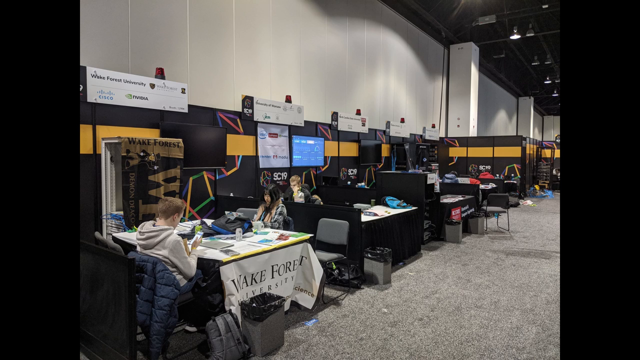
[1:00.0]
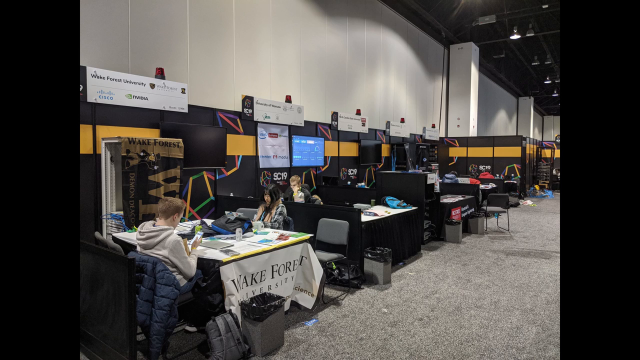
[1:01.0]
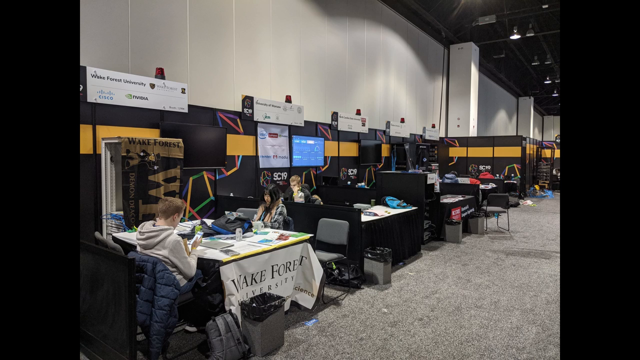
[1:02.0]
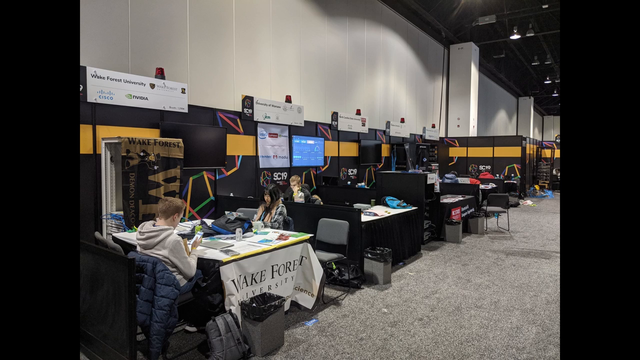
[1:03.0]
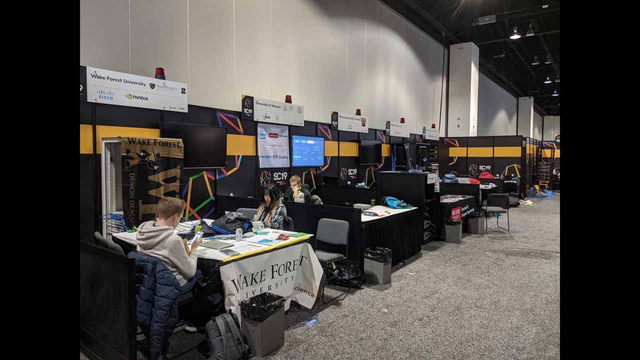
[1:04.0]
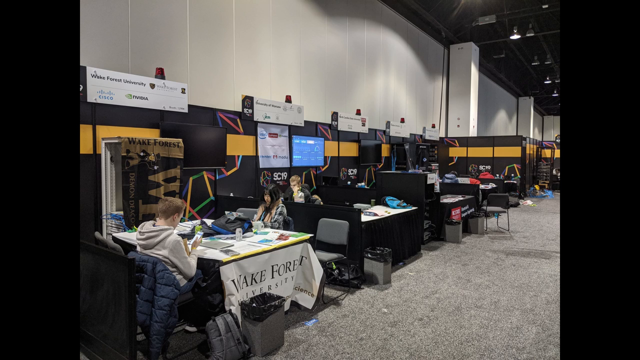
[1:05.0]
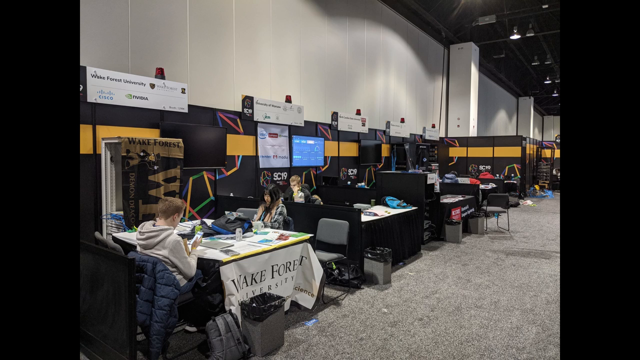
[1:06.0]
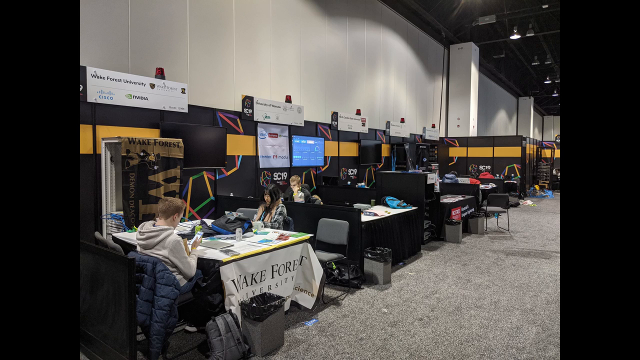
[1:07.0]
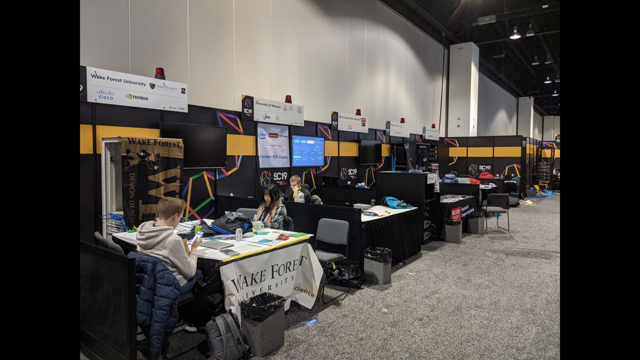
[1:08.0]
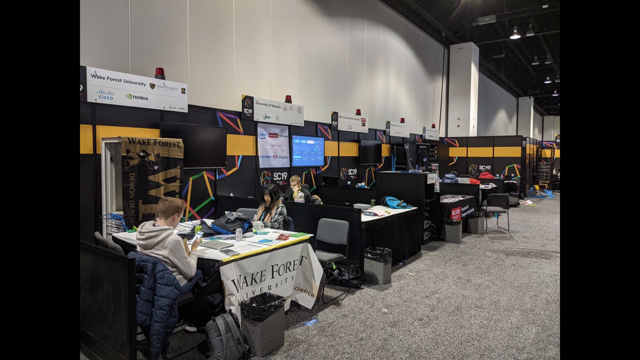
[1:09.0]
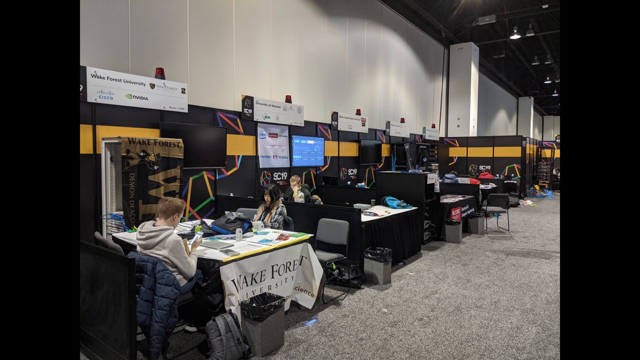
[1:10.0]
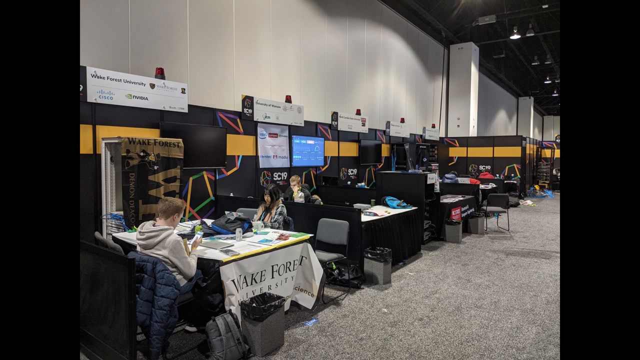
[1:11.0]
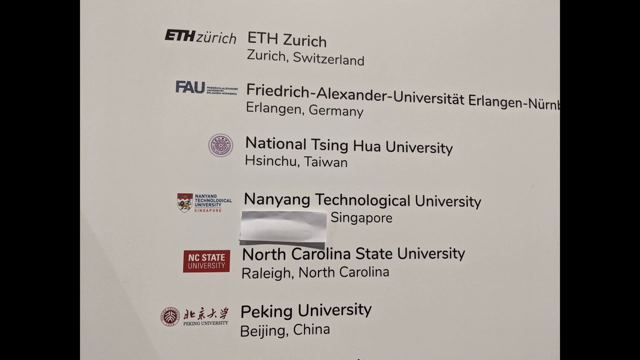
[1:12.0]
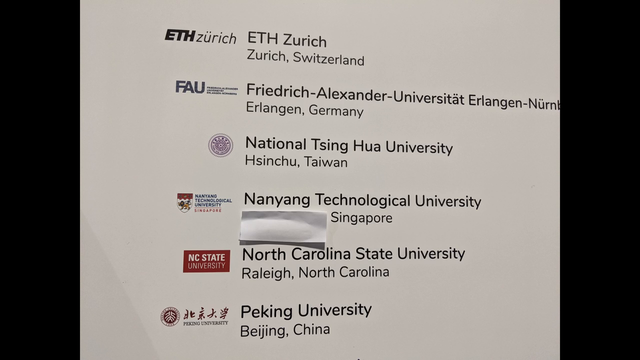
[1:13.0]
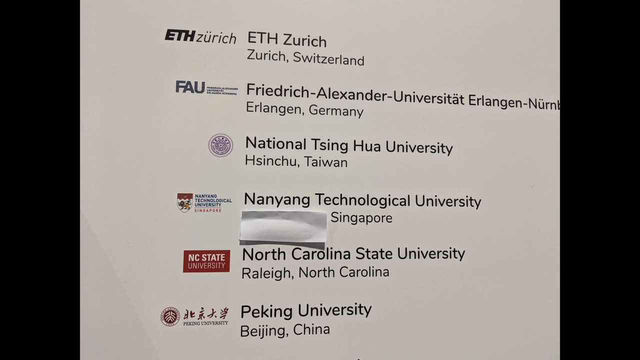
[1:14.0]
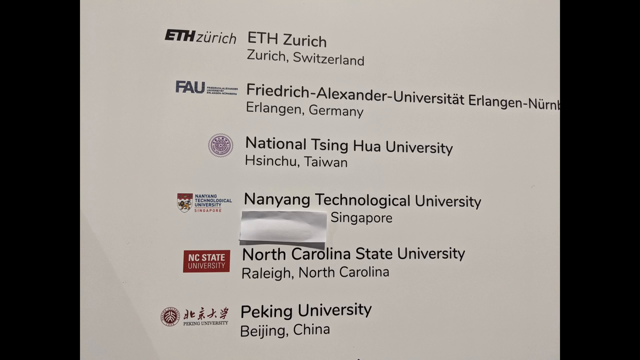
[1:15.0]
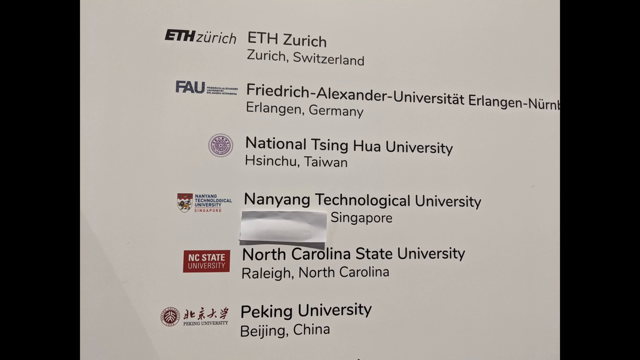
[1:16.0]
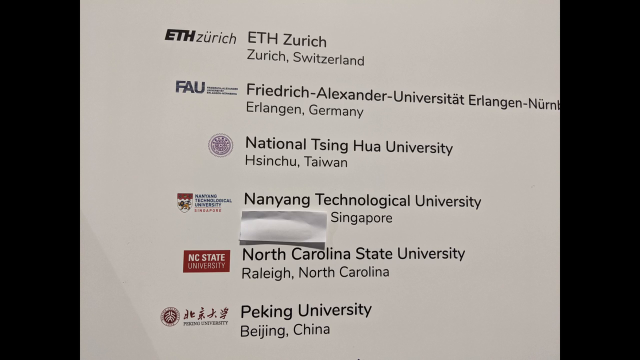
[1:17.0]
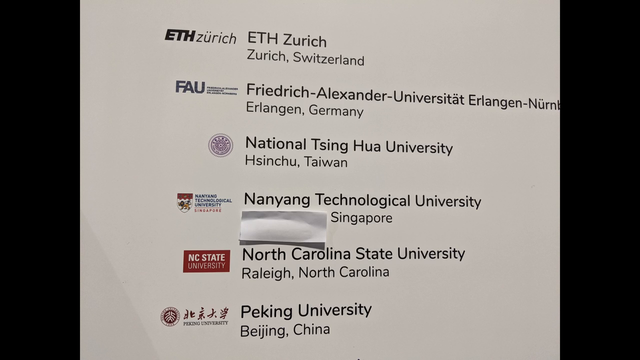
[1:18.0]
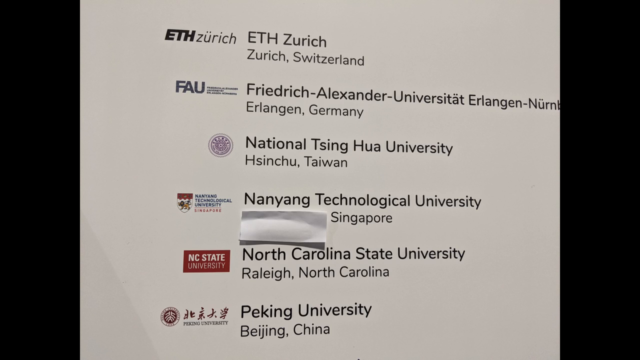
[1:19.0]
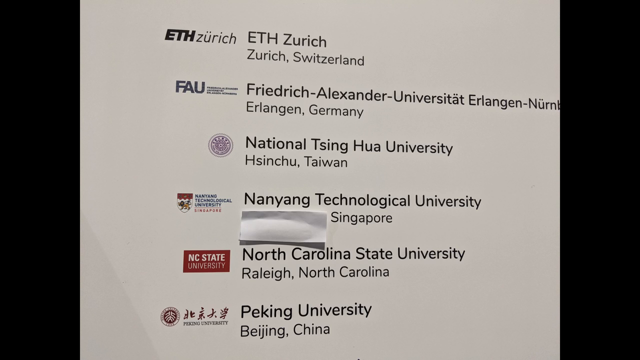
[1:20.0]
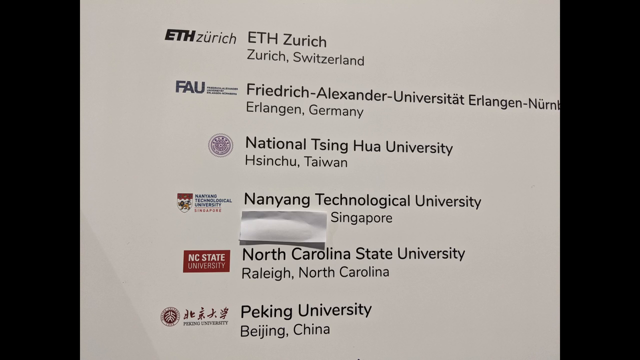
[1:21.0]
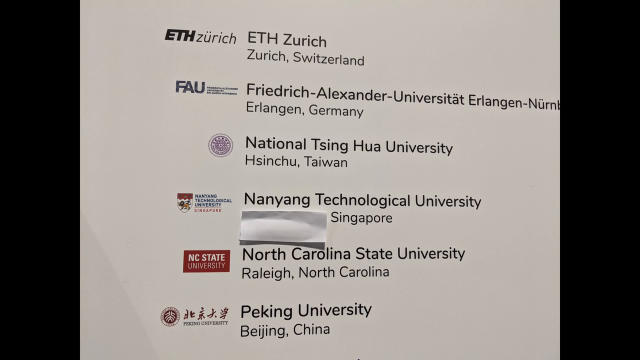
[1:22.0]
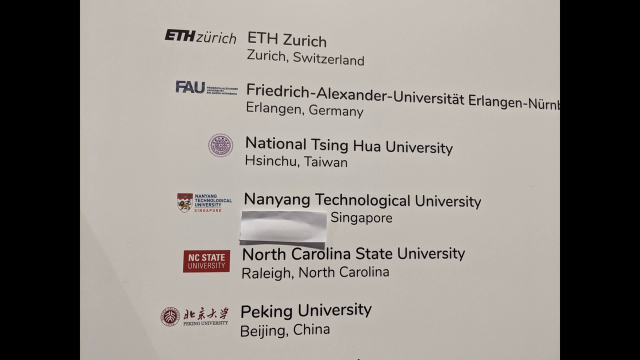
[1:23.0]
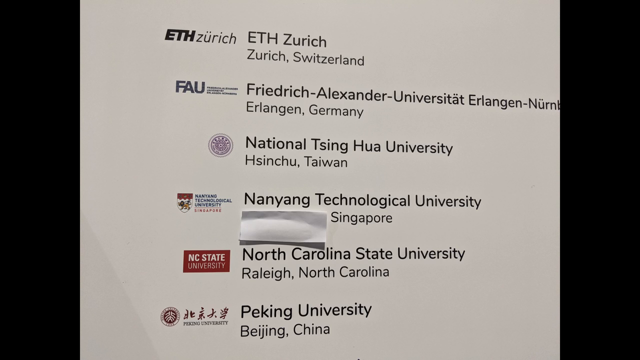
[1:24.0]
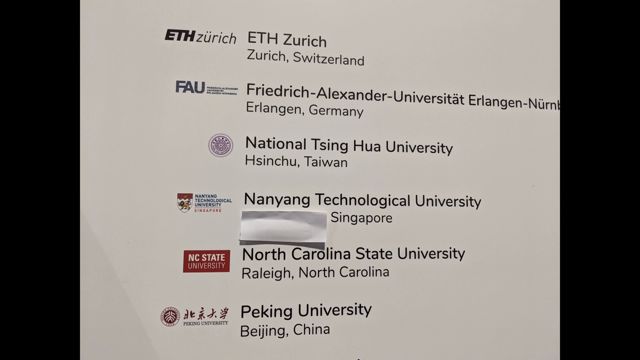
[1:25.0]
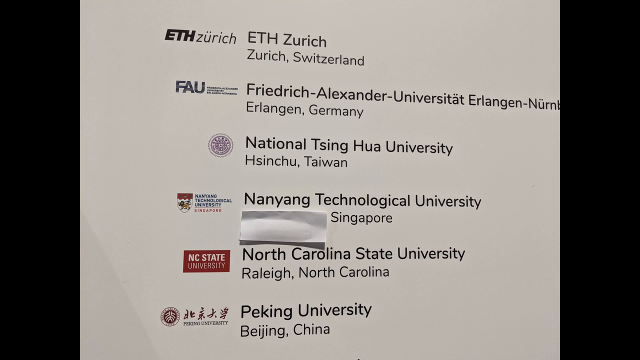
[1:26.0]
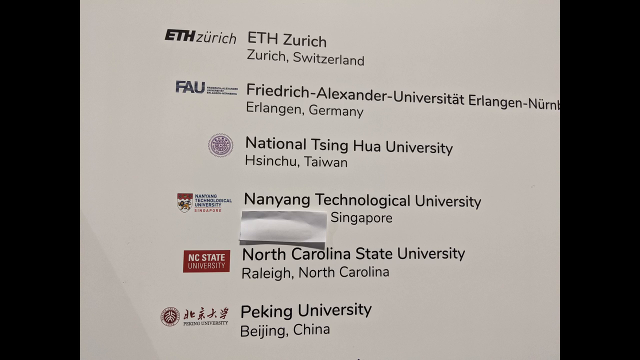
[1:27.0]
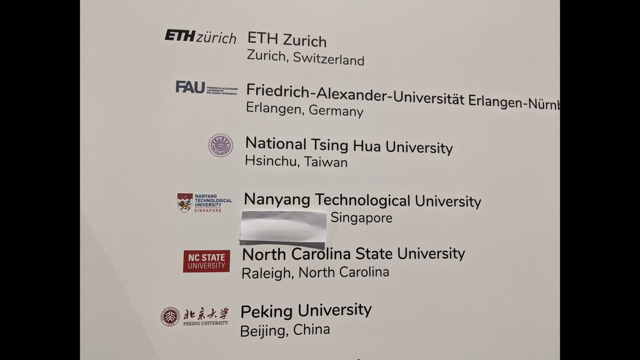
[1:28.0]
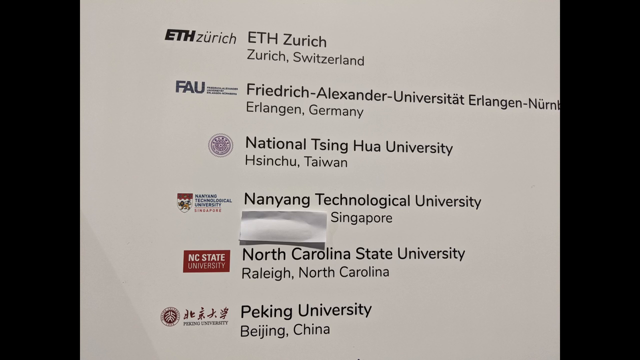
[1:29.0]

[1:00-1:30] The large area appears to be some sort of large warehouse or gym-style space. In the bottom left corner, students sit at a table, and all of the sections are separated by half-height black wall panels. Wake Forest is at the bottom left corner, with the Wake Forest flag on the outside of the table, facing outward so people can see it. The shot mainly focuses on this area. In the background, other students are sitting at tables. Gray trash cans with black trash bags are on the outside near the tables. The chairs are standard chairs with gray cushions and black framing. Toward the end, a white page appears listing different universities, with a piece of paper covering the location of one of the universities, from Singapore.